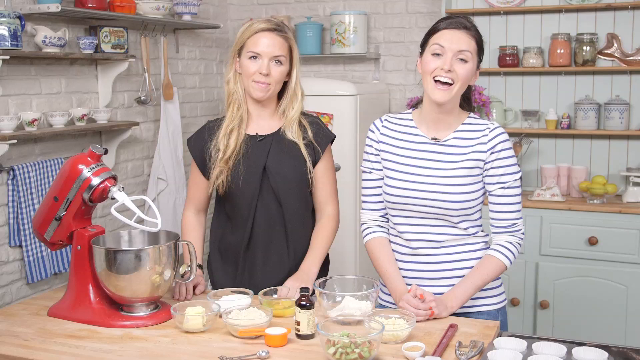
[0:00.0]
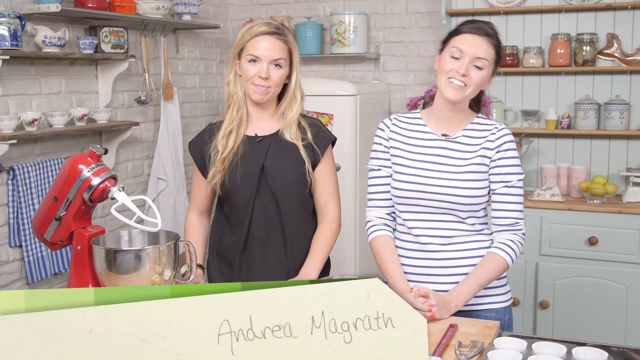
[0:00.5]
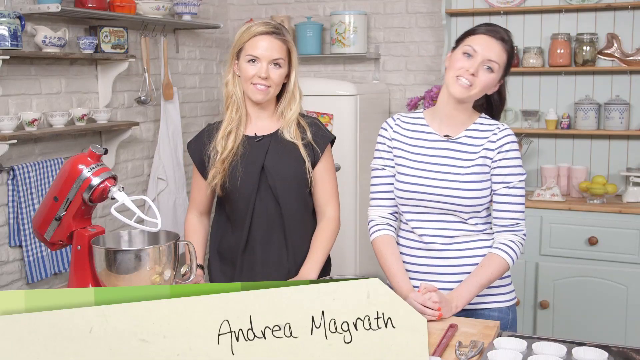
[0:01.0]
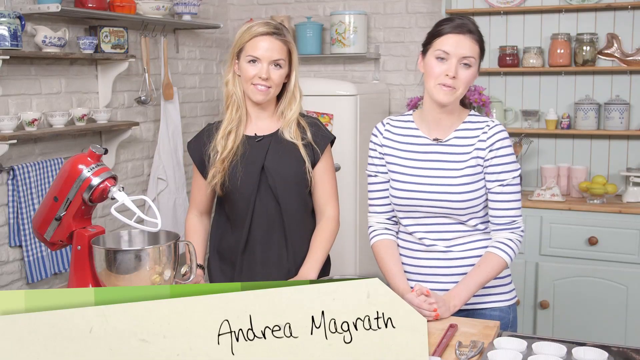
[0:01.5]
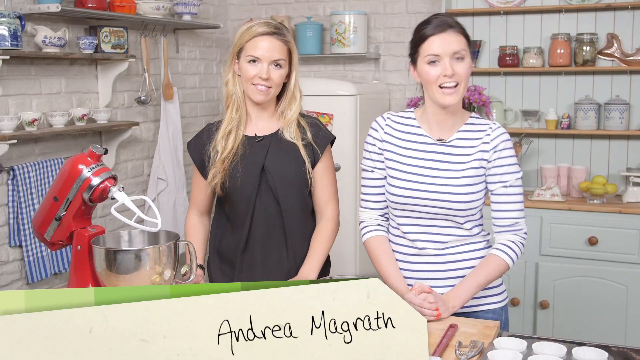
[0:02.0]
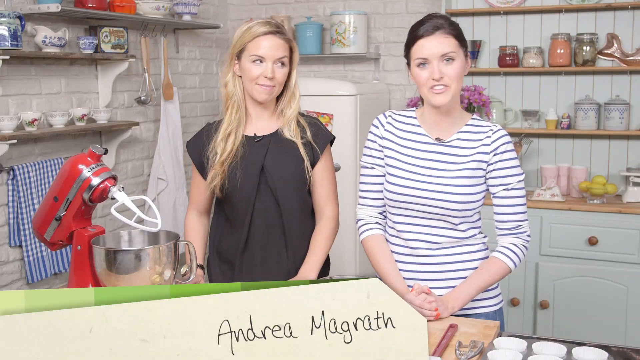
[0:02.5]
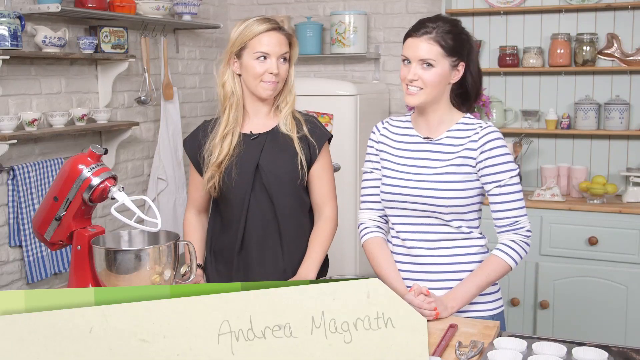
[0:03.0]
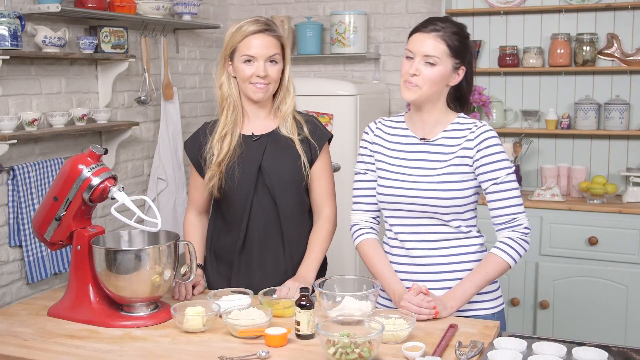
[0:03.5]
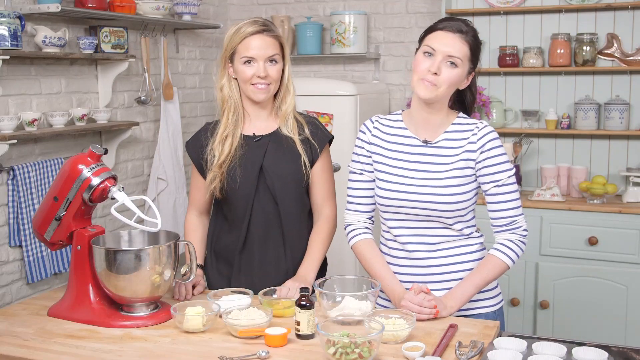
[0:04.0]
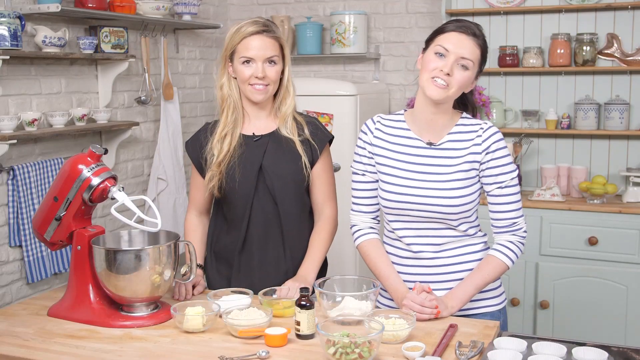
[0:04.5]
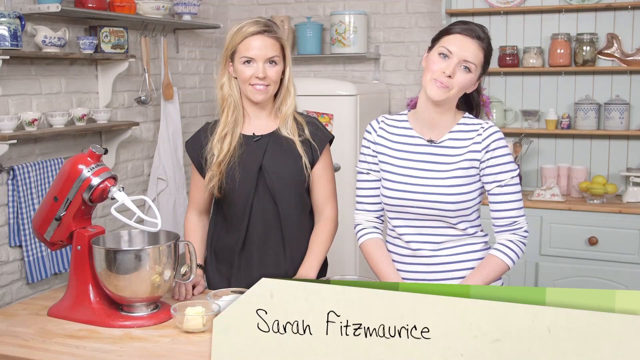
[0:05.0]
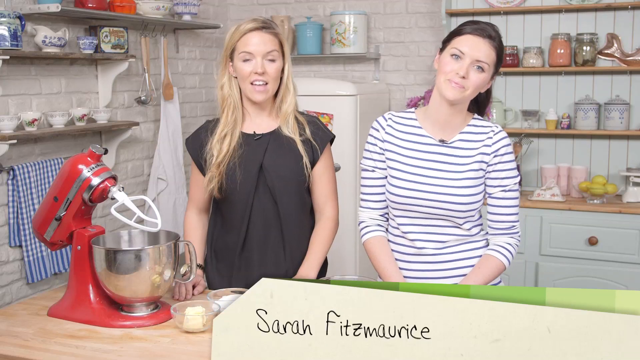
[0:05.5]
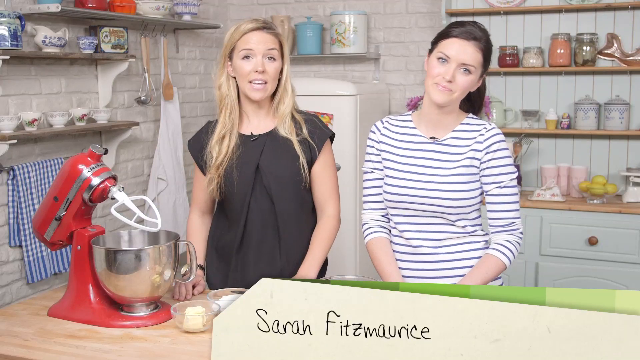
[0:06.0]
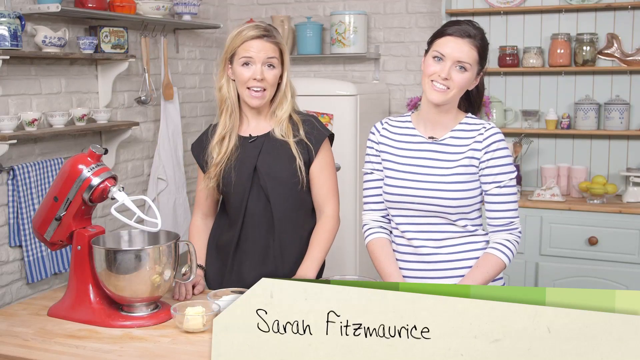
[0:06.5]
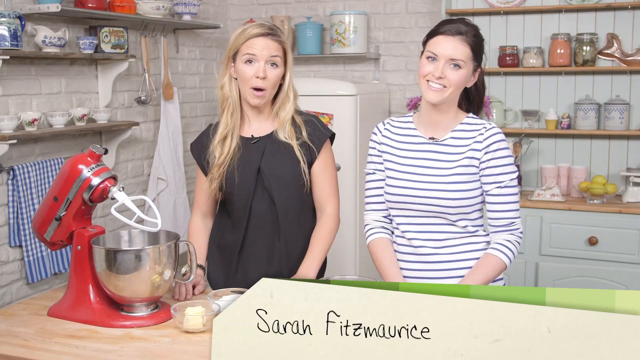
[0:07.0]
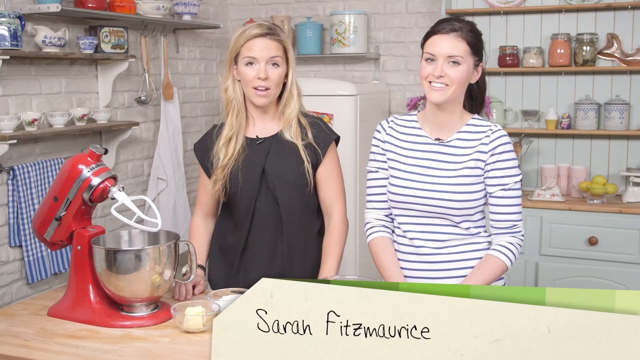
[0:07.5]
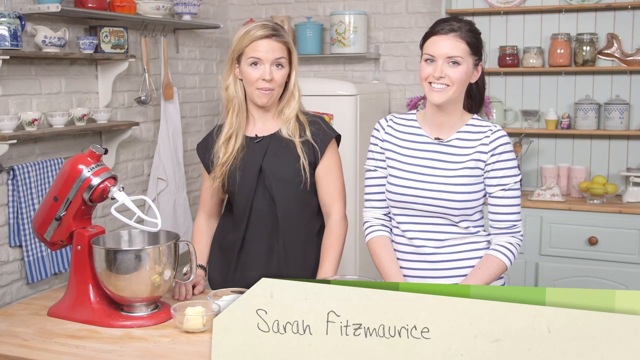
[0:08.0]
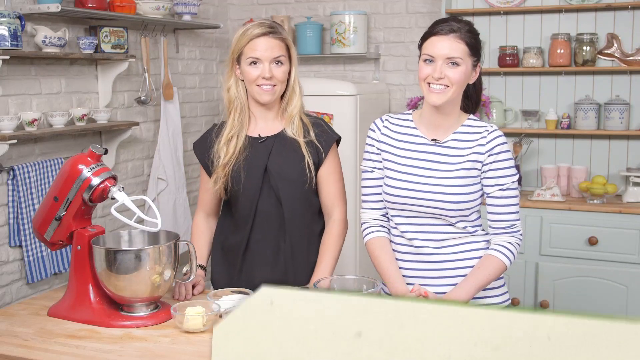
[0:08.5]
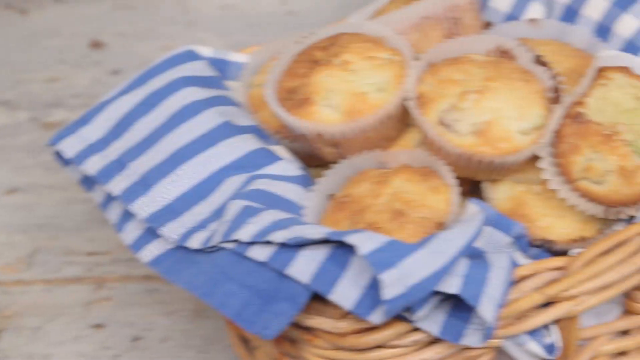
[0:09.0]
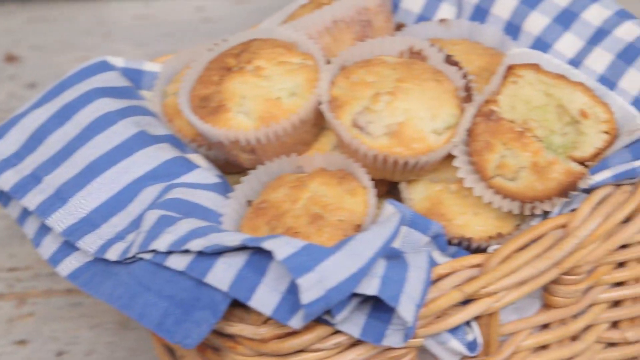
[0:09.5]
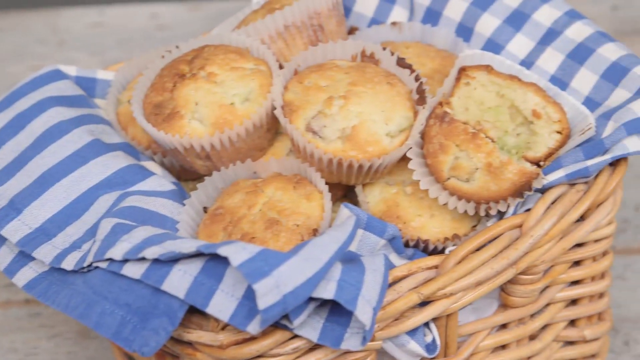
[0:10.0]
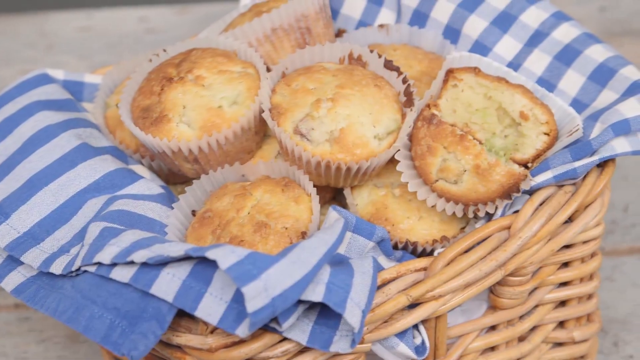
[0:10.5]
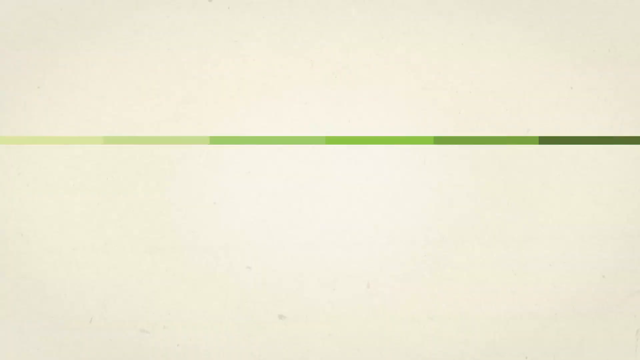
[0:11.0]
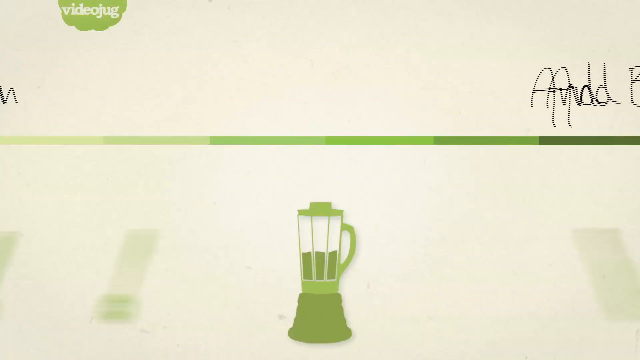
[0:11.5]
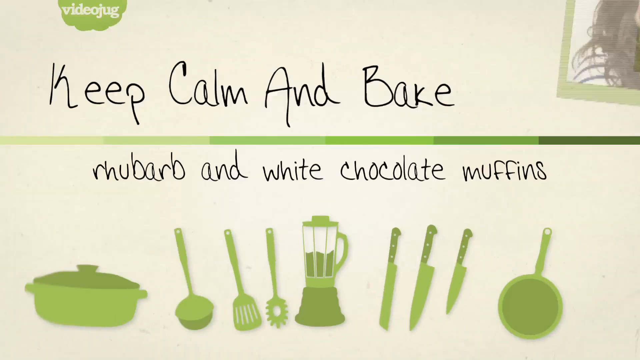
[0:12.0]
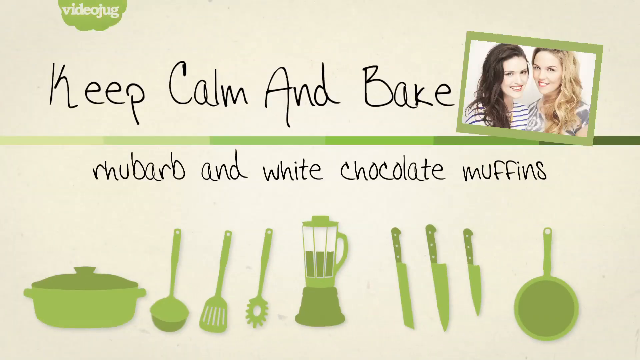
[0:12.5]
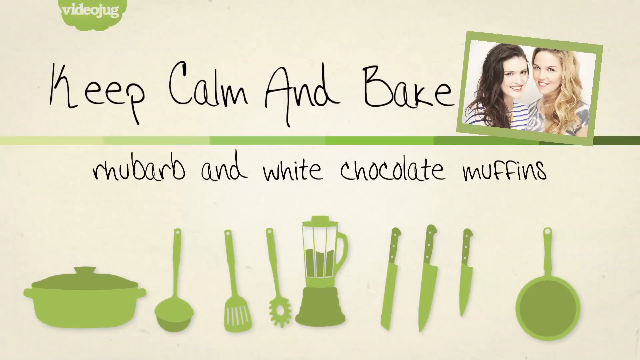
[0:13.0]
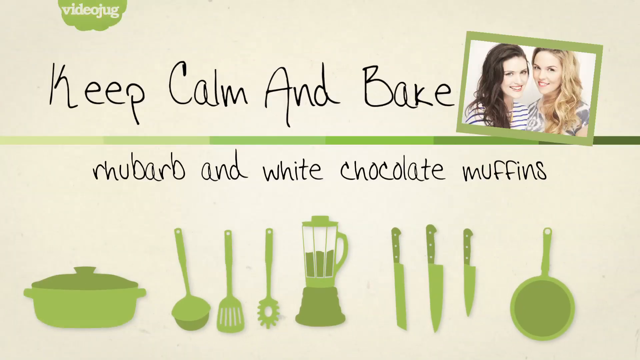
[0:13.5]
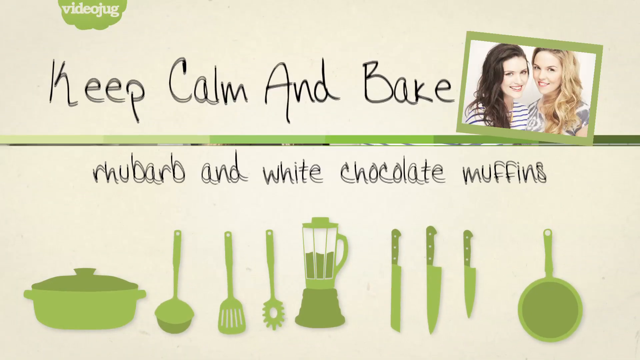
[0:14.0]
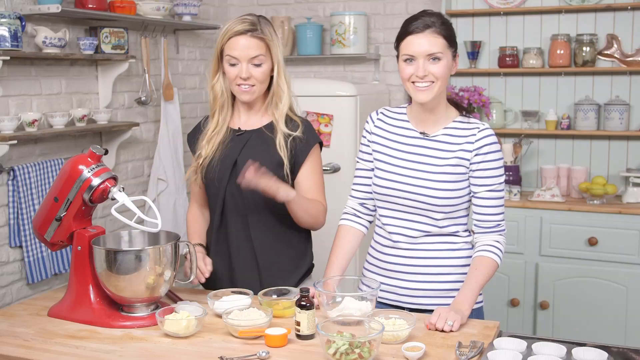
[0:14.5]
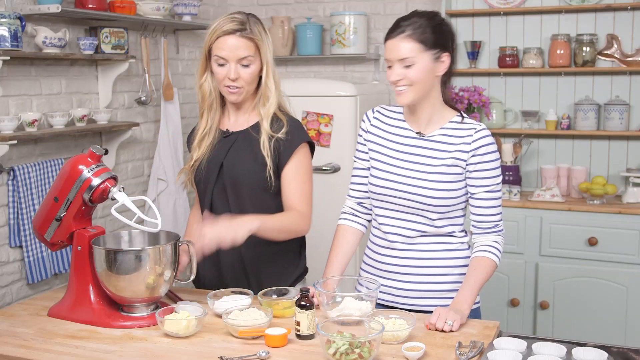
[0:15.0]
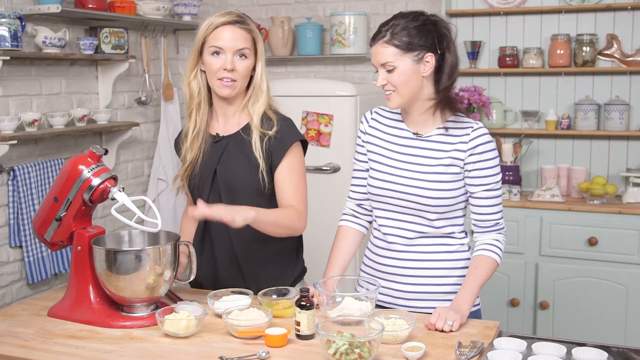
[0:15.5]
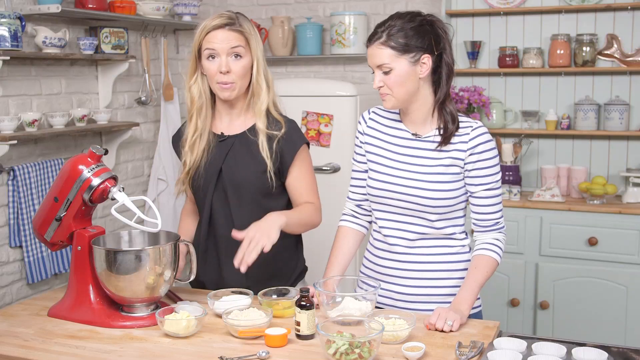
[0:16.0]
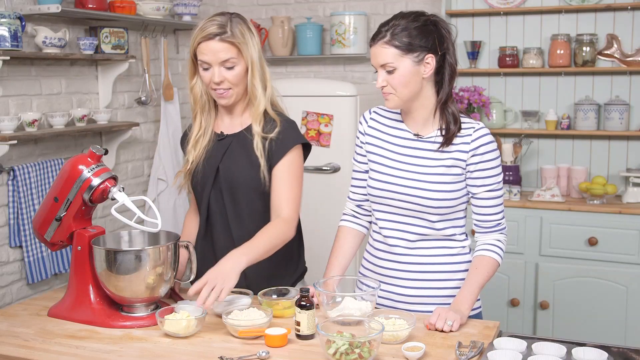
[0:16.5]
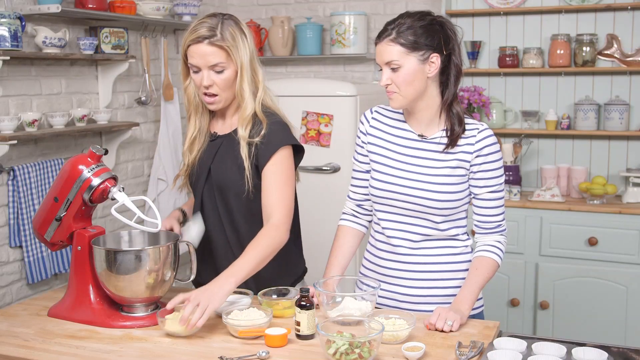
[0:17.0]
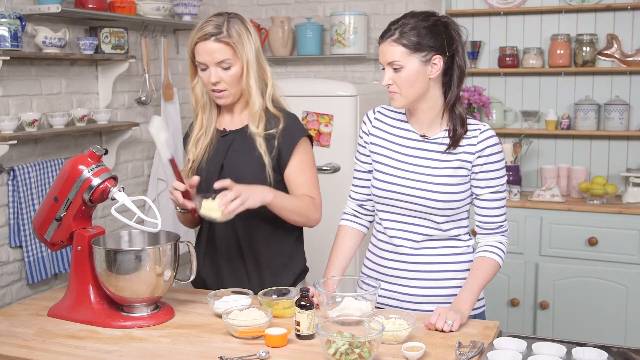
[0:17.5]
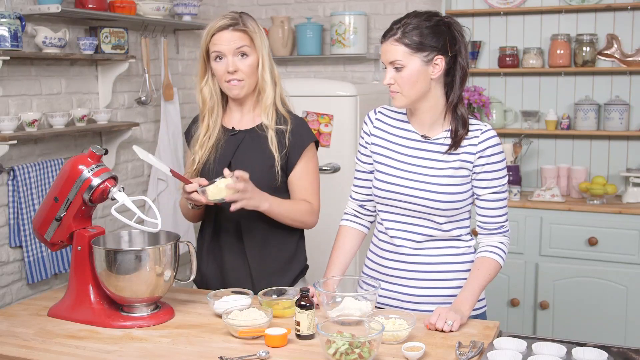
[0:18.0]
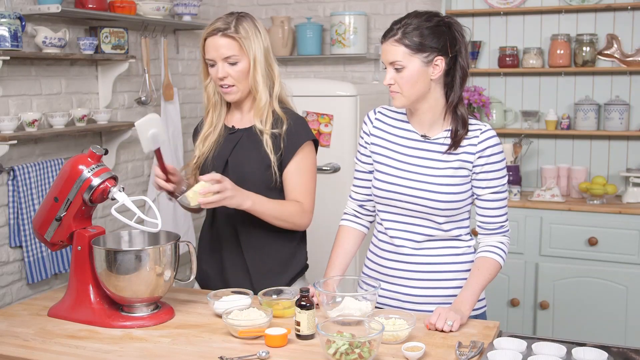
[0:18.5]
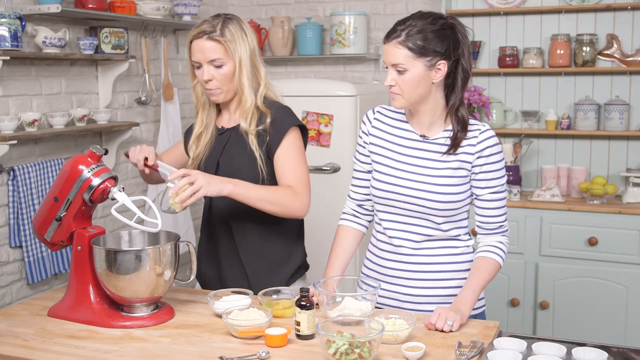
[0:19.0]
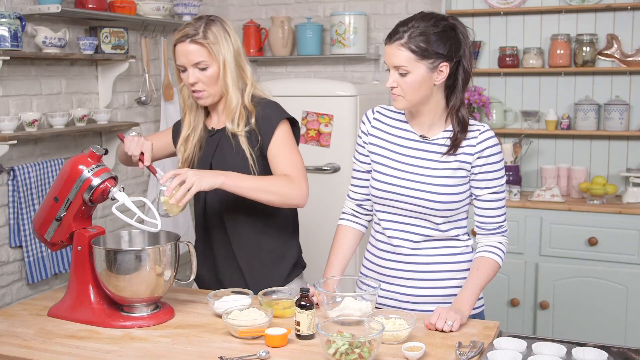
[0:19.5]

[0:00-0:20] Two ladies are in front of a camera, one on the left and one on the right. The one on the left wears a white striped long-sleeve shirt with the sleeves pulled up to her elbows, and she has brown hair. The girl on the right wears some sort of black dress shirt and has blonde hair. They seem to be in some sort of kitchen, getting ready to cook. Both are smiling. A name appears reading "Andrea Margareth," apparently one of the ladies' names, and another name reads "Sarah Fritz Morais"; these are presumably both of their names.